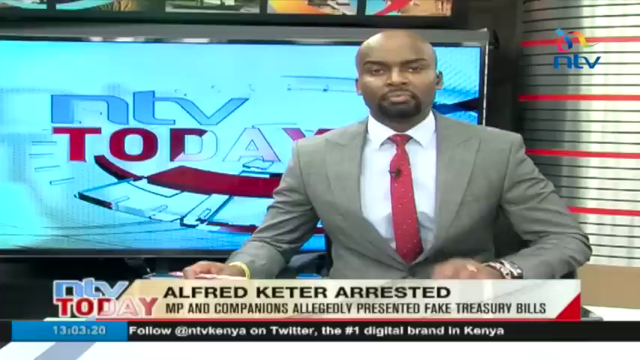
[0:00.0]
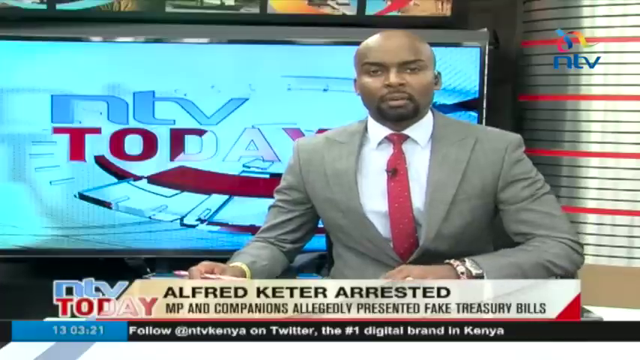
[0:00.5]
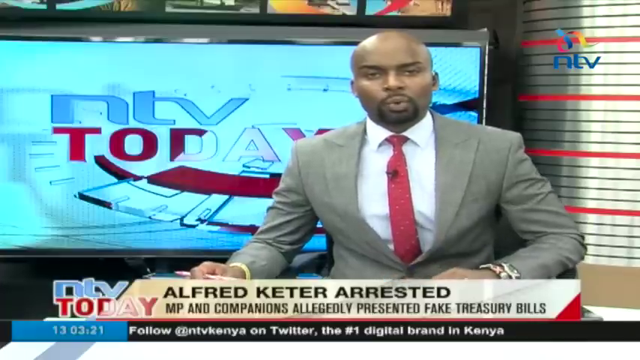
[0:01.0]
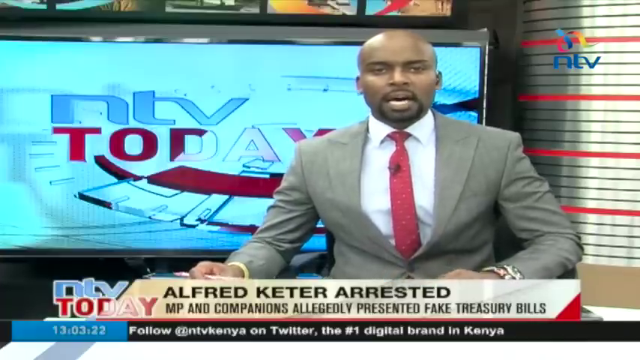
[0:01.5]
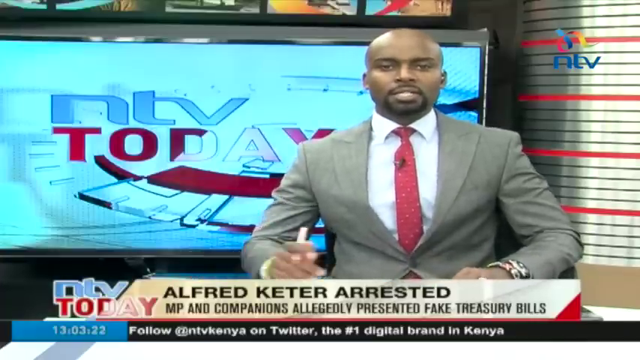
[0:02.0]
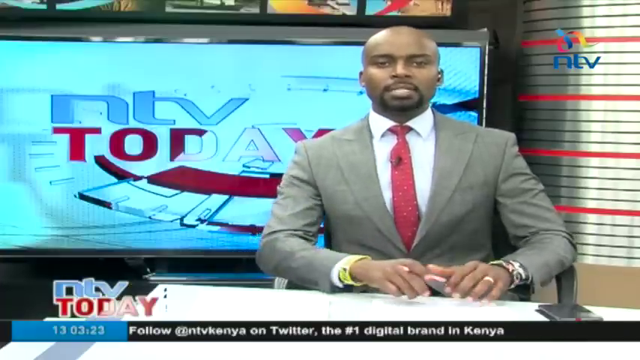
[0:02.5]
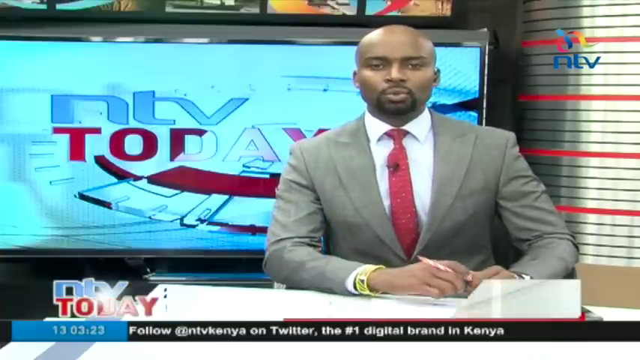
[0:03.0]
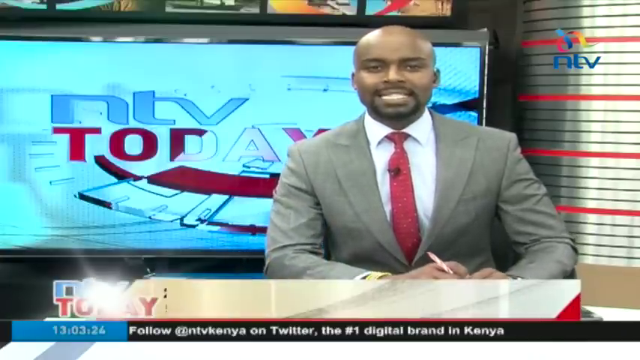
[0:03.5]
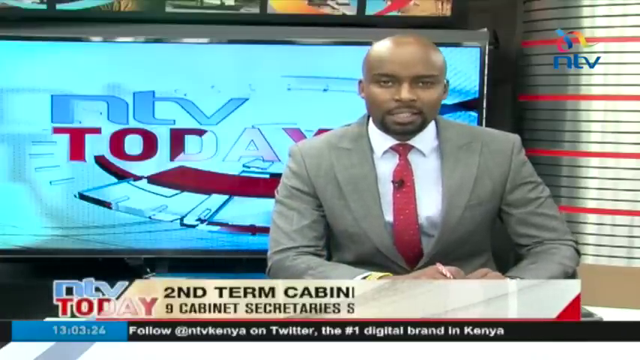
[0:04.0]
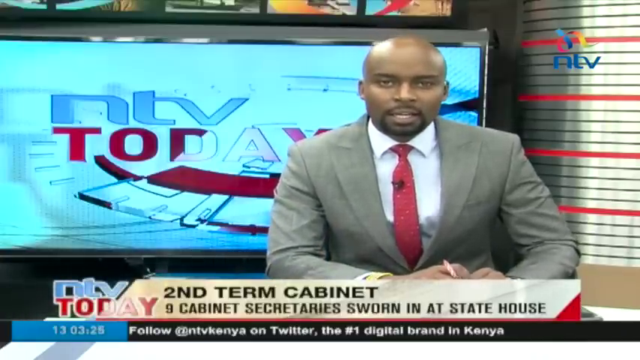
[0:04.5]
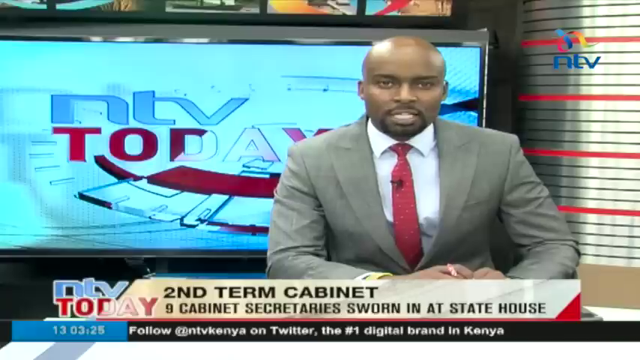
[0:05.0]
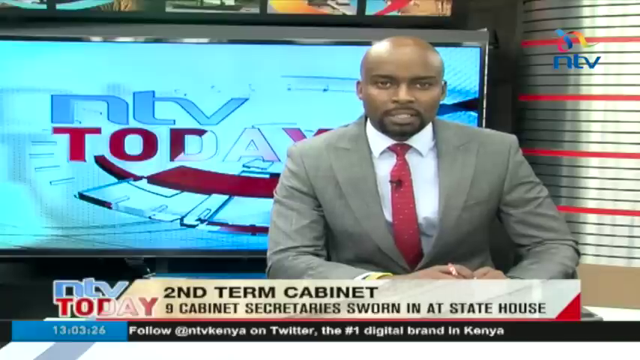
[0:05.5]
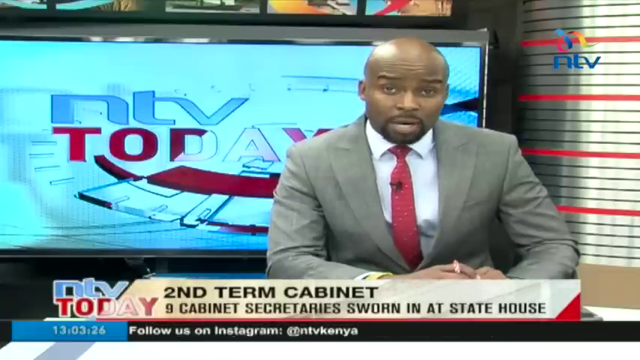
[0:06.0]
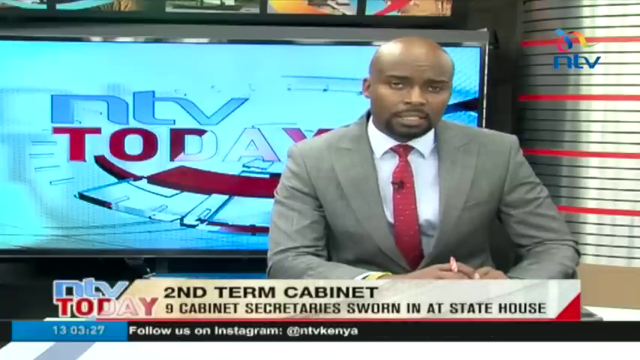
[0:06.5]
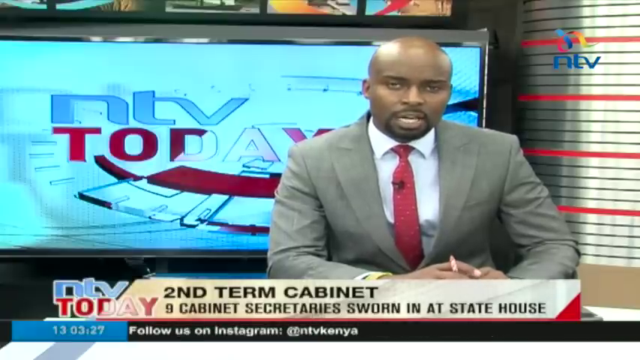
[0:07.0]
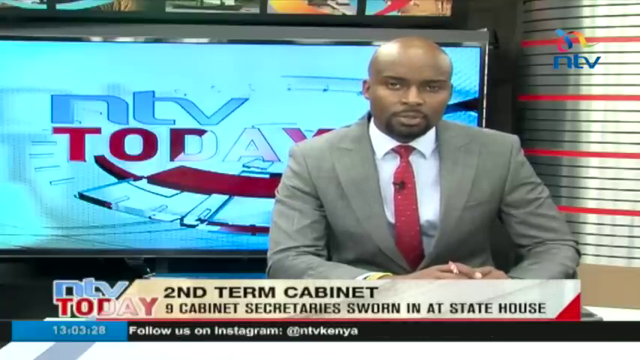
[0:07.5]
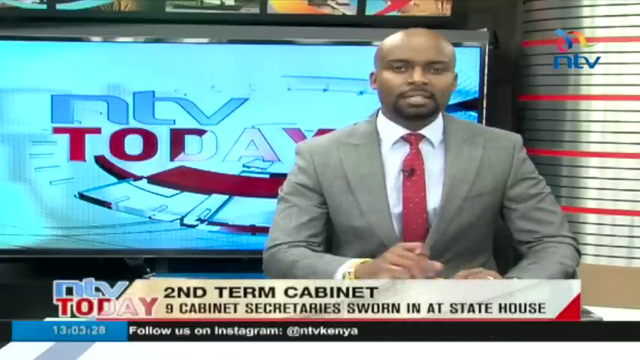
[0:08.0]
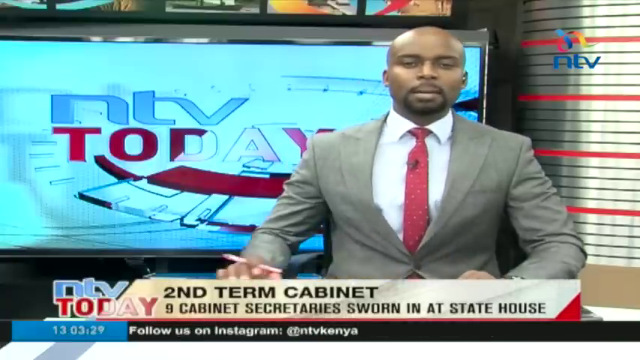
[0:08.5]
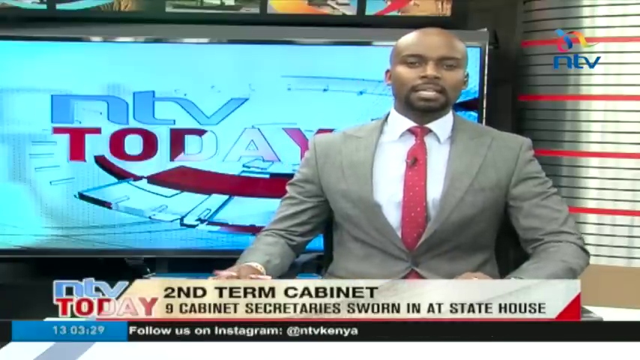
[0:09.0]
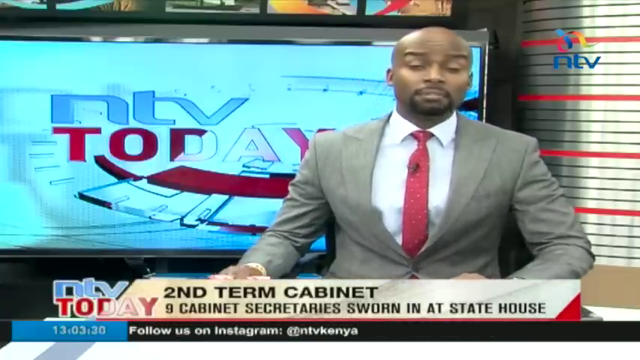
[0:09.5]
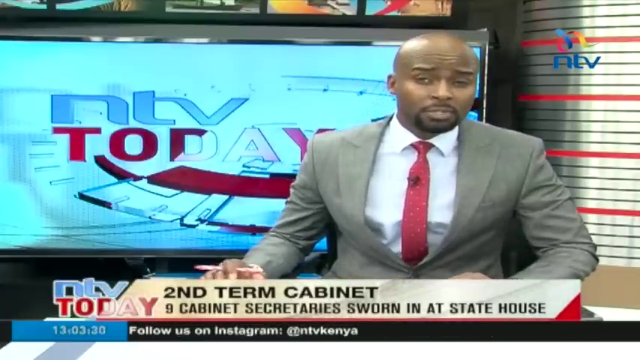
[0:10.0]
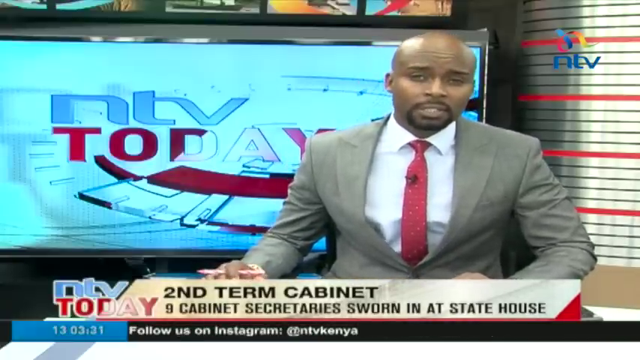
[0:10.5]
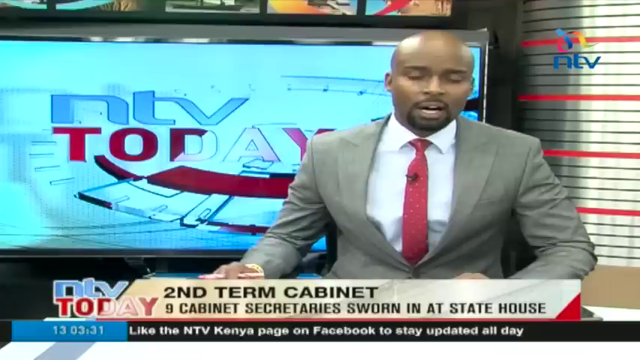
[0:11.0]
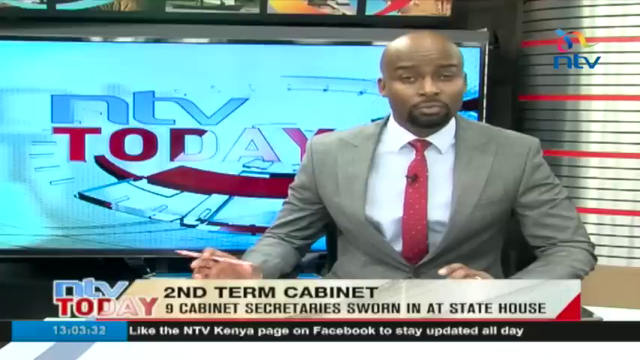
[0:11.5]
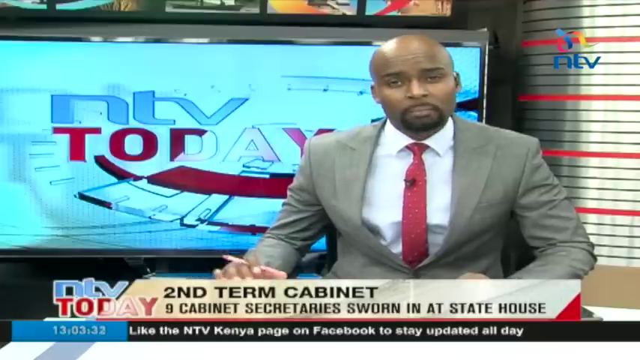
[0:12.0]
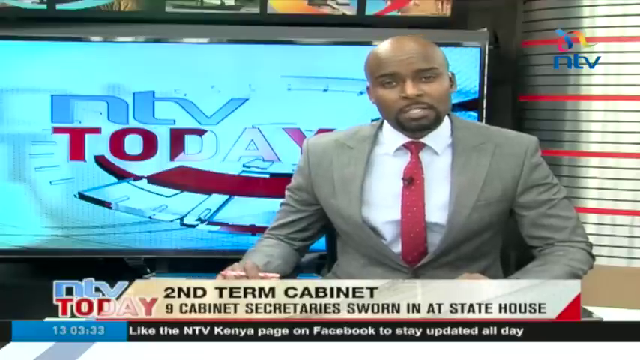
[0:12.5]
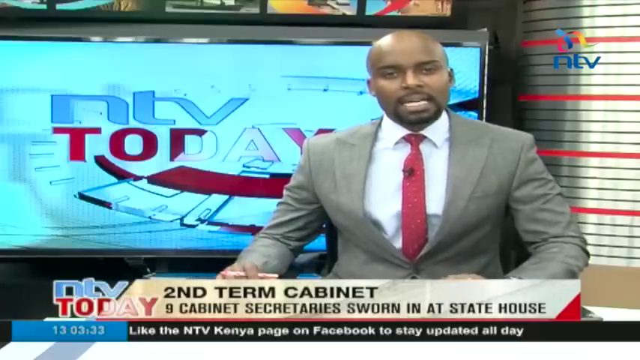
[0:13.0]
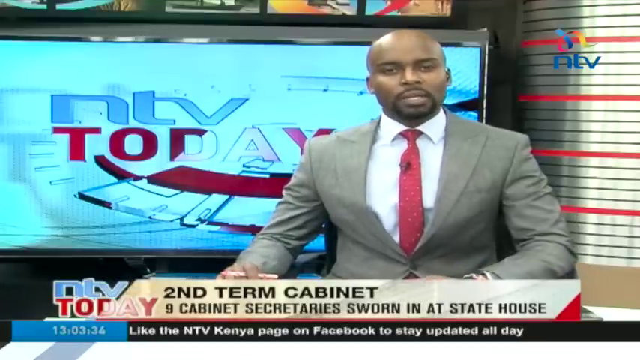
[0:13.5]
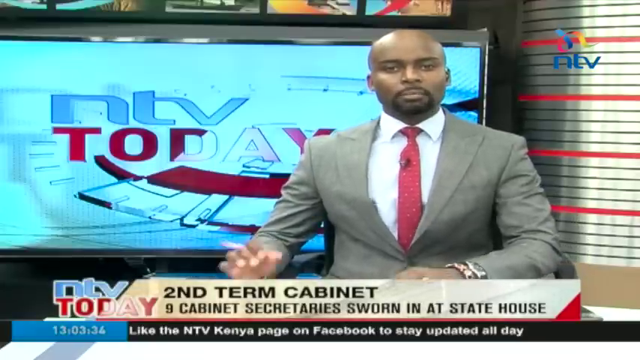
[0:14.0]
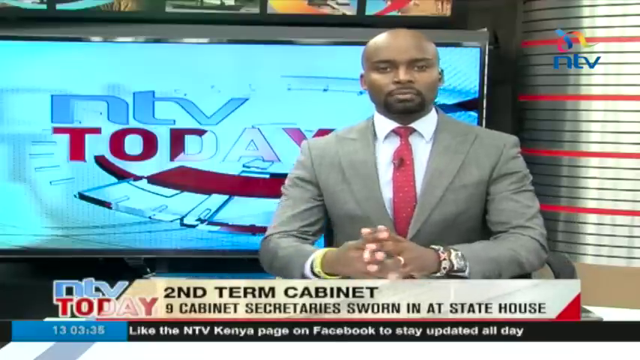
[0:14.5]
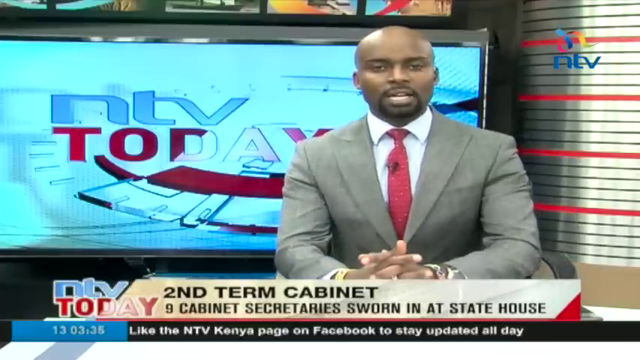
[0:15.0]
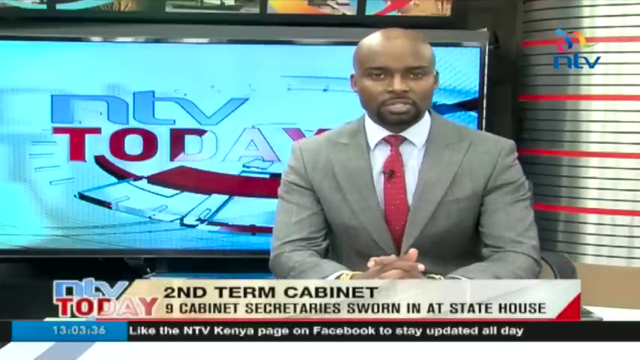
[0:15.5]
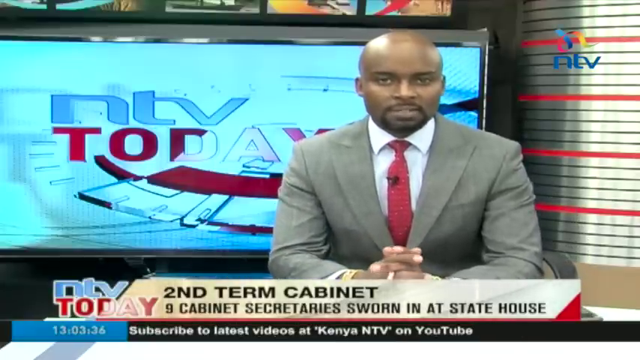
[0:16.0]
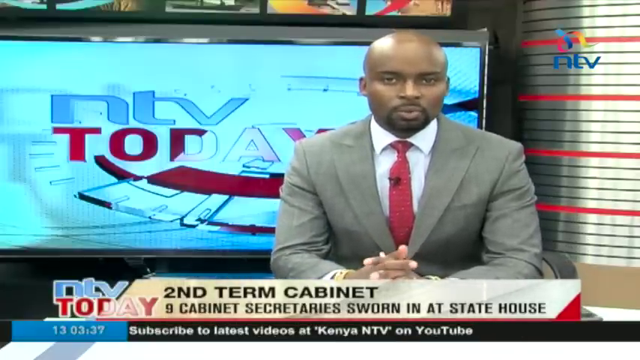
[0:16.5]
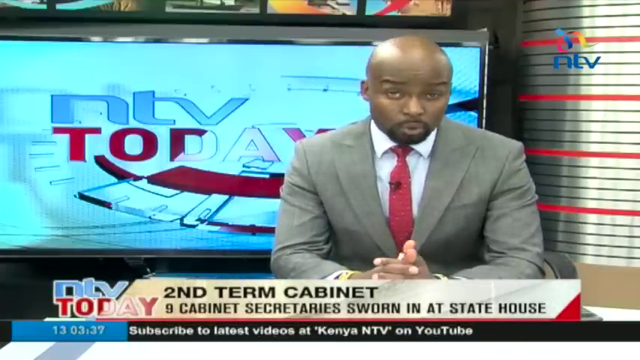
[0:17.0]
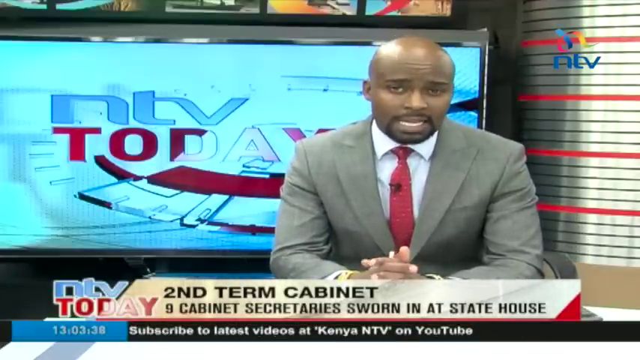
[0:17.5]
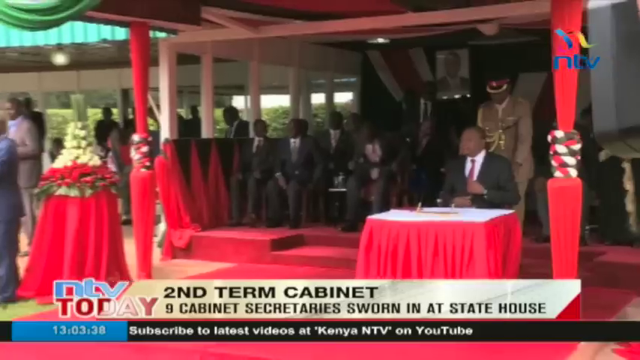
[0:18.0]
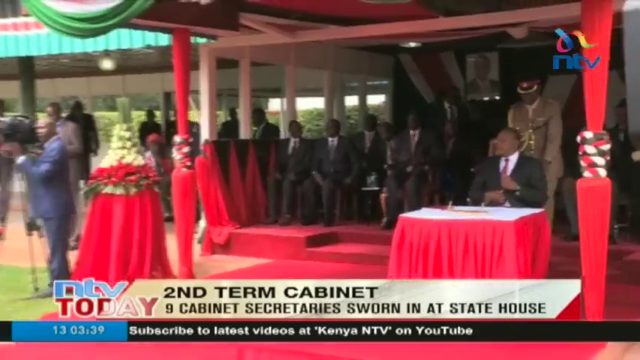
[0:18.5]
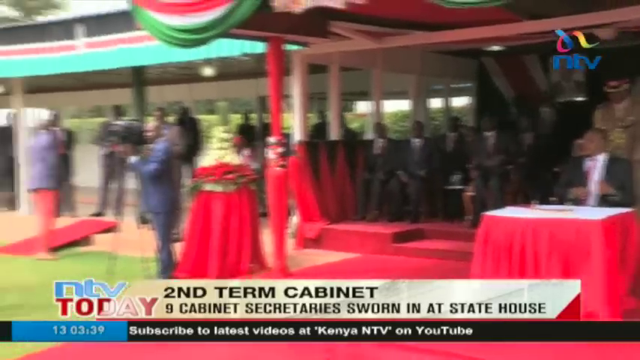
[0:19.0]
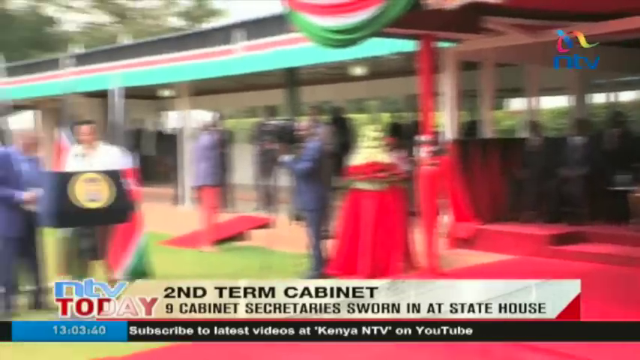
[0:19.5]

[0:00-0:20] A news reporter in a suit reads the news facing the camera, and his name is shown on the screen. Behind him a TV screen shows "NTV today." On-screen text reads "second term cabinet, nine cabinet secretaries," a story from NTV news. Another headline story reads "Alfred Kita arrested," mentioning an MP and companions.